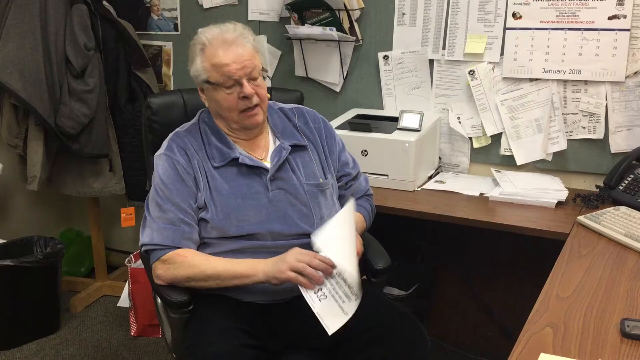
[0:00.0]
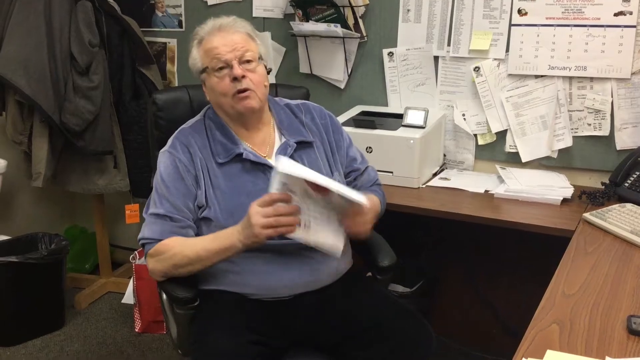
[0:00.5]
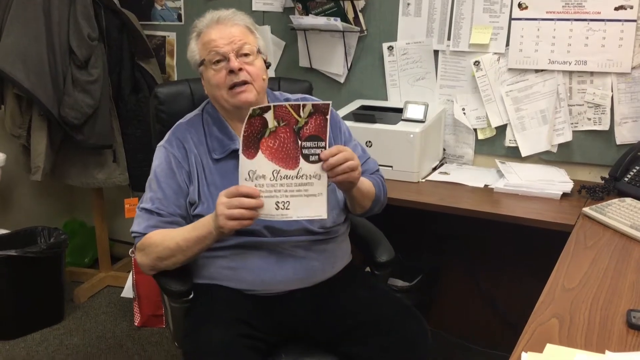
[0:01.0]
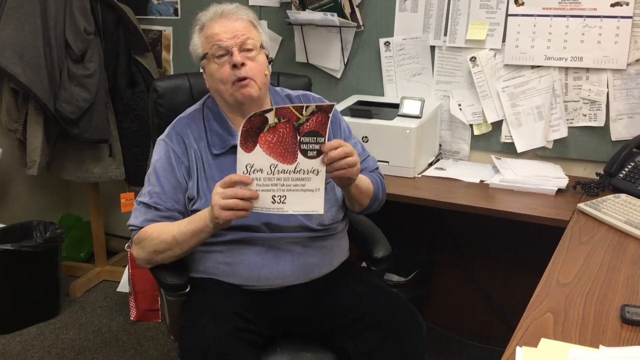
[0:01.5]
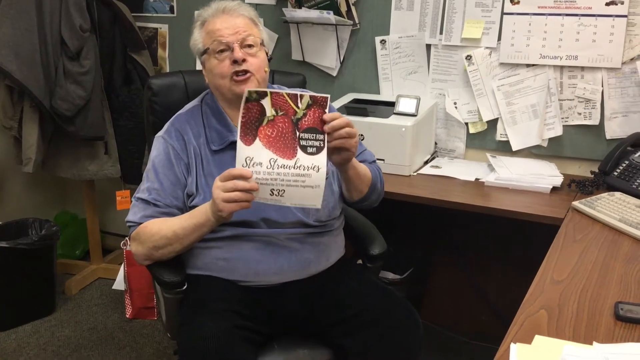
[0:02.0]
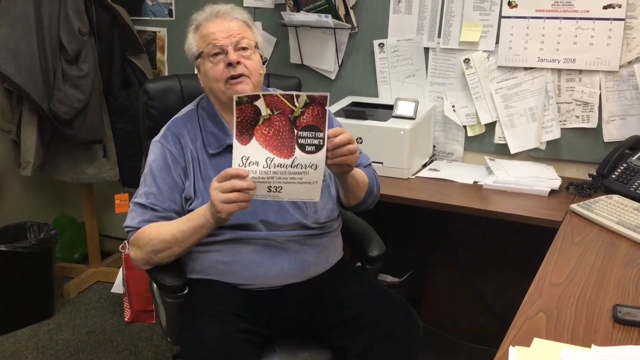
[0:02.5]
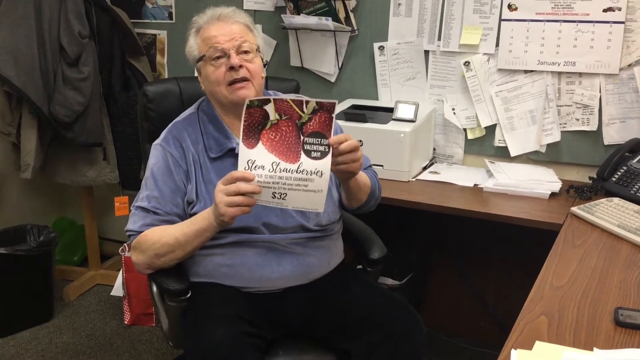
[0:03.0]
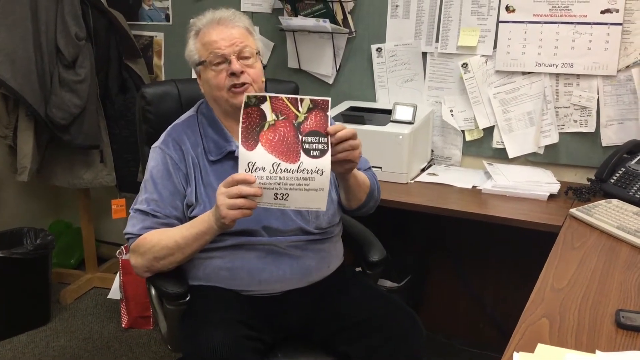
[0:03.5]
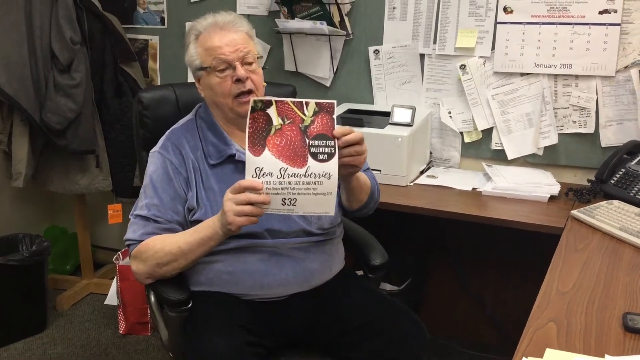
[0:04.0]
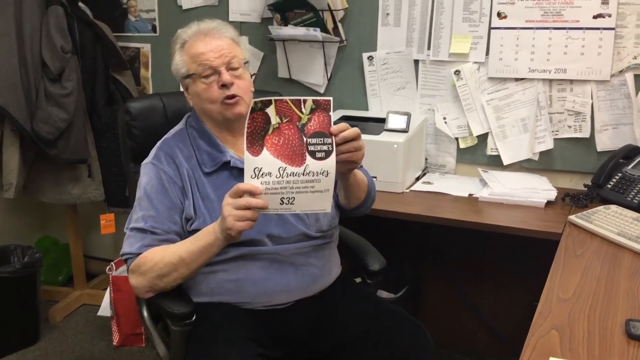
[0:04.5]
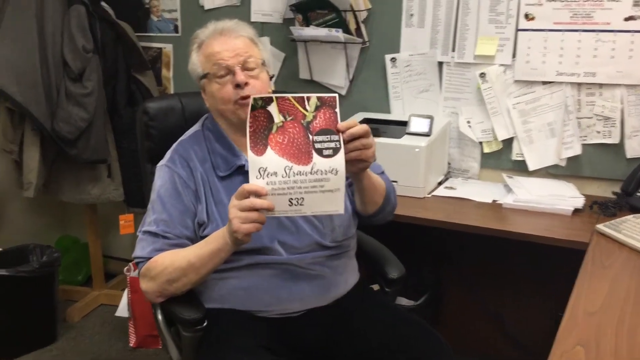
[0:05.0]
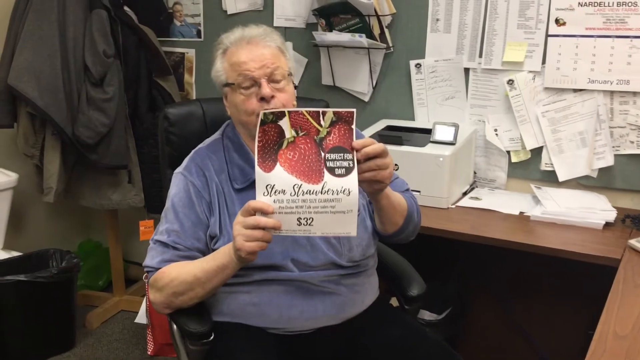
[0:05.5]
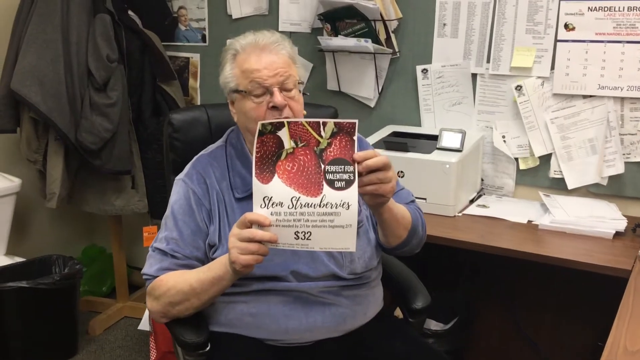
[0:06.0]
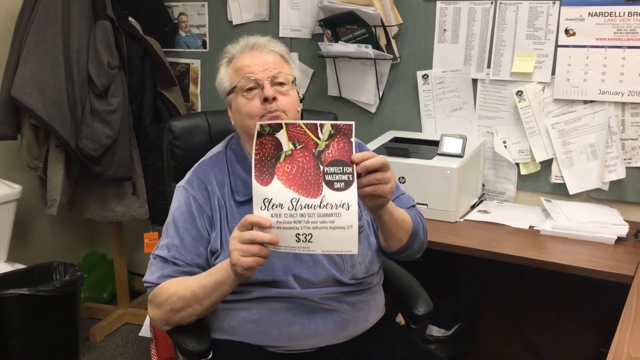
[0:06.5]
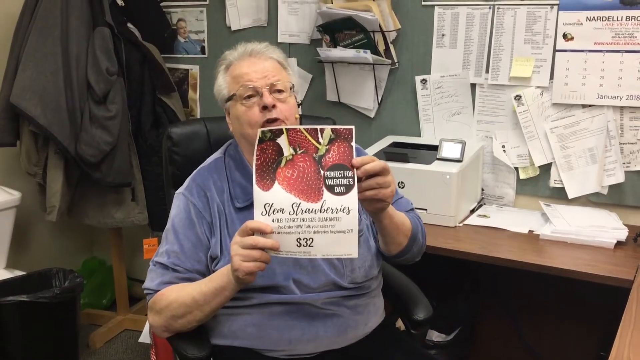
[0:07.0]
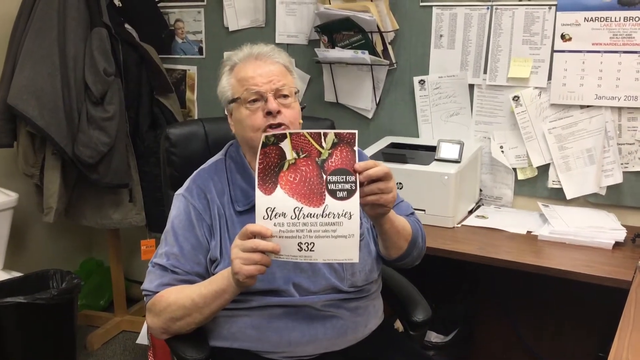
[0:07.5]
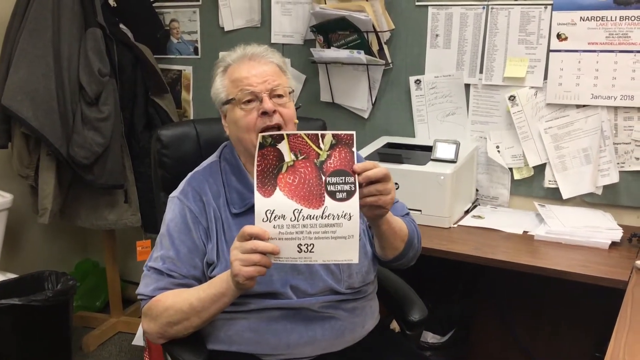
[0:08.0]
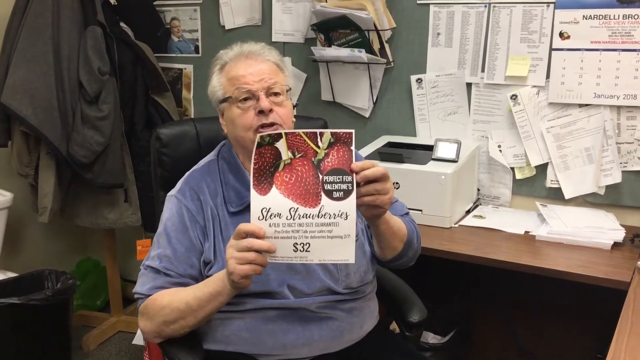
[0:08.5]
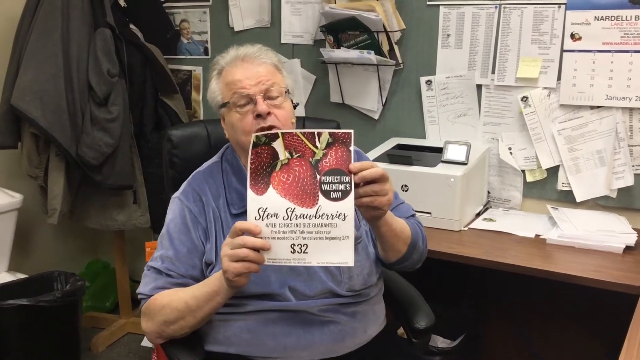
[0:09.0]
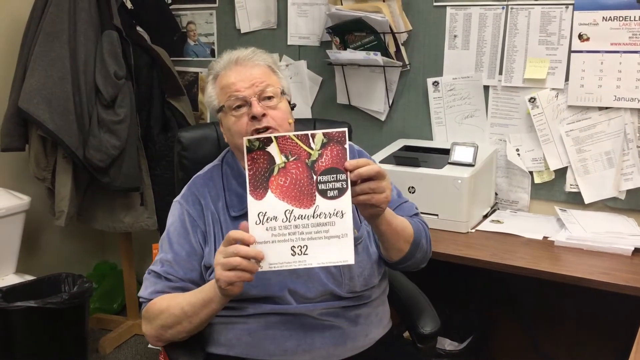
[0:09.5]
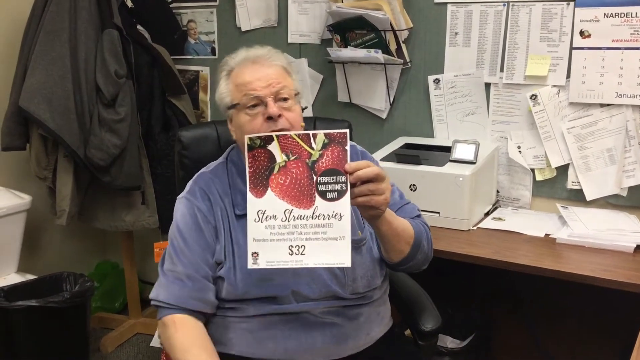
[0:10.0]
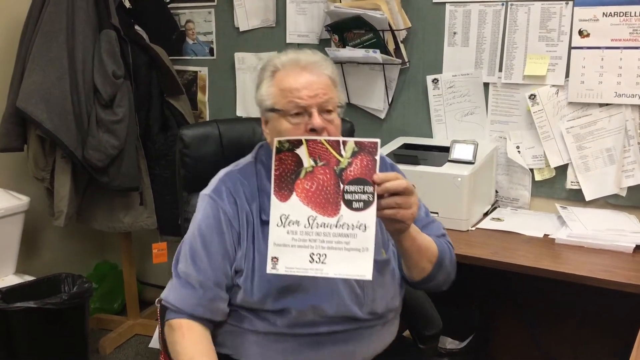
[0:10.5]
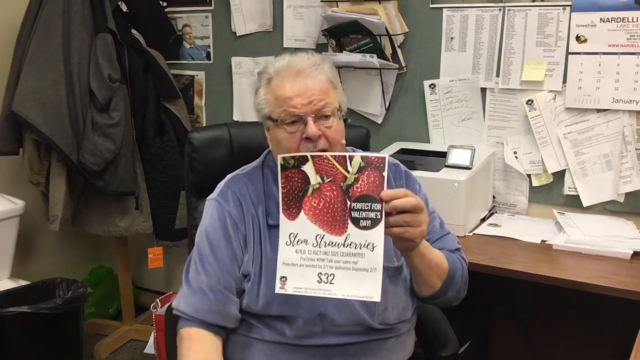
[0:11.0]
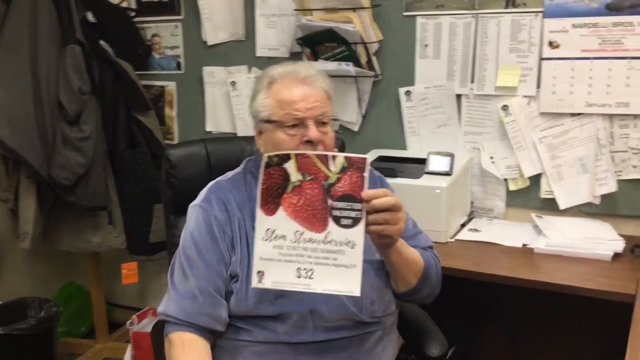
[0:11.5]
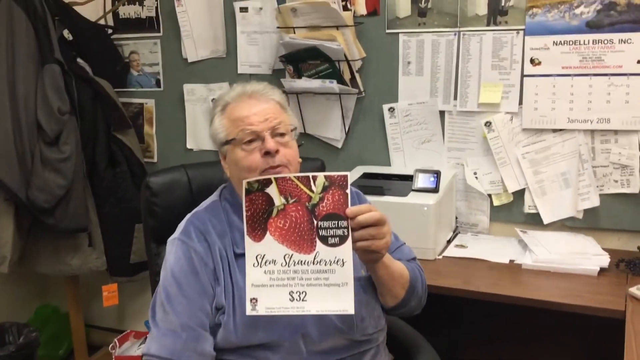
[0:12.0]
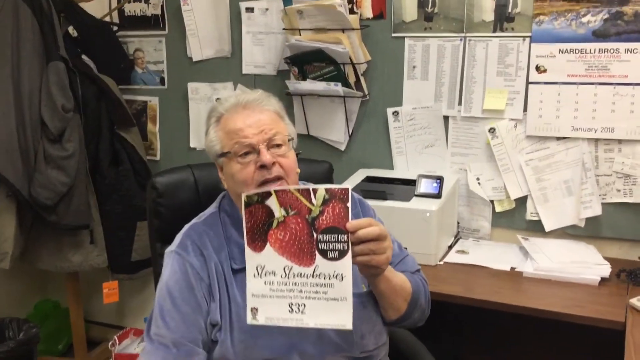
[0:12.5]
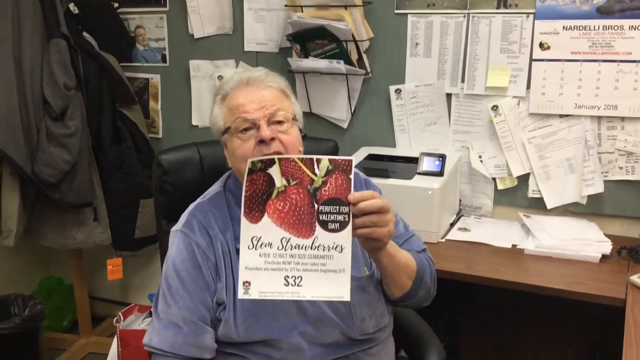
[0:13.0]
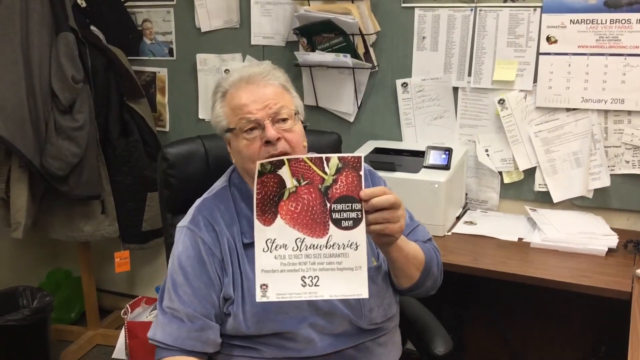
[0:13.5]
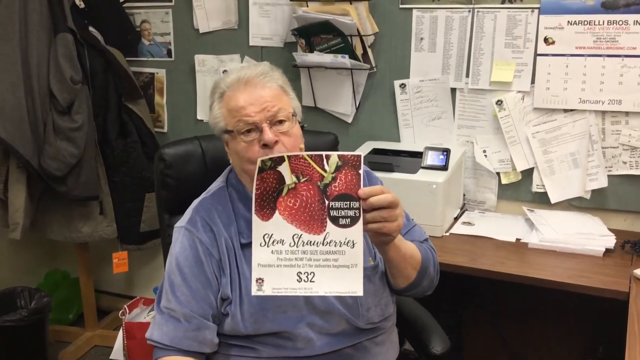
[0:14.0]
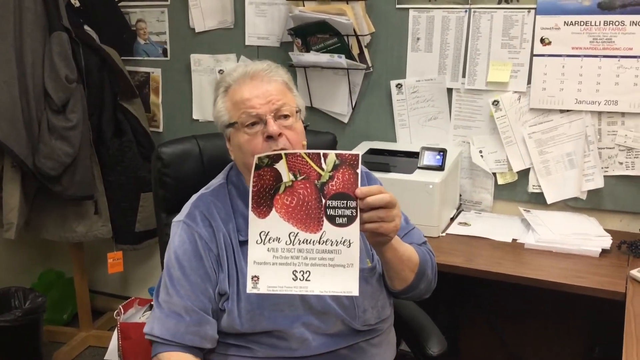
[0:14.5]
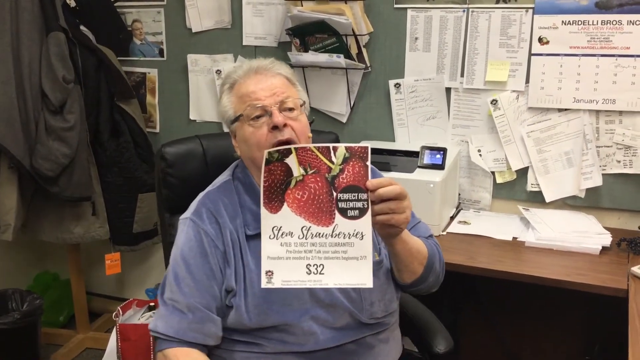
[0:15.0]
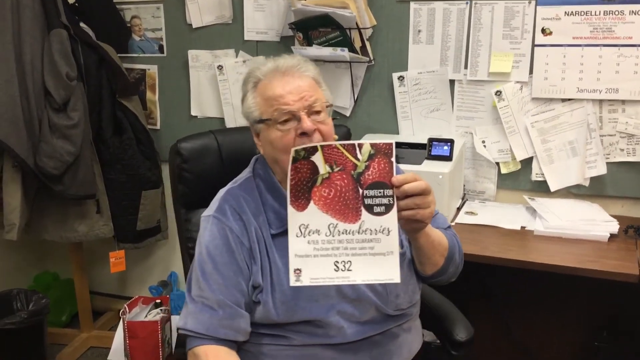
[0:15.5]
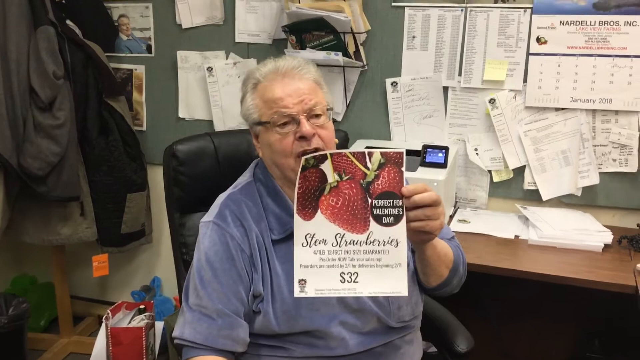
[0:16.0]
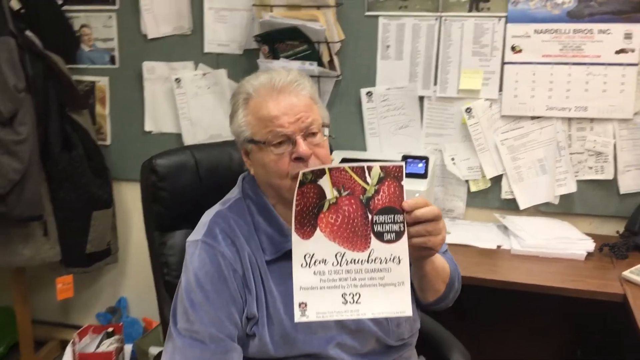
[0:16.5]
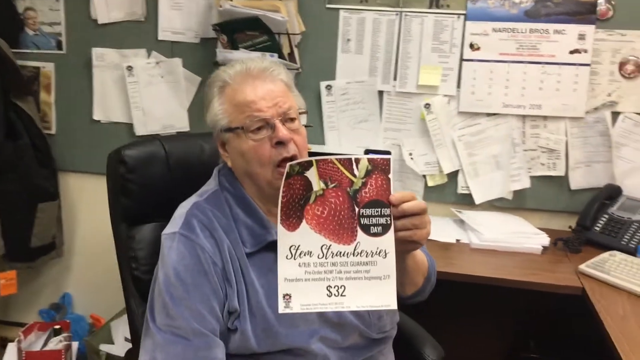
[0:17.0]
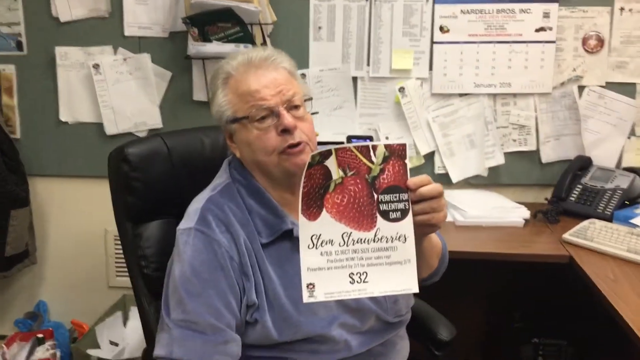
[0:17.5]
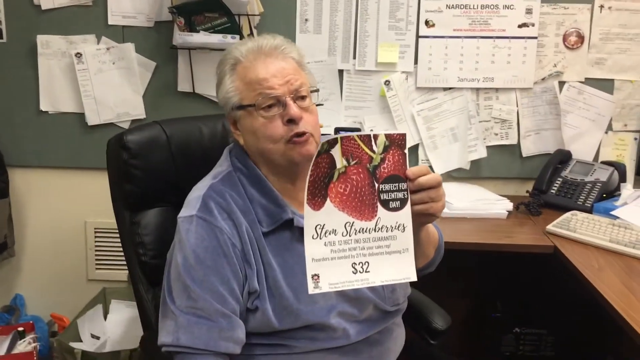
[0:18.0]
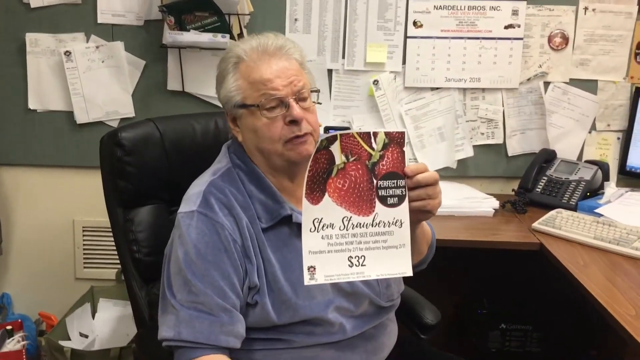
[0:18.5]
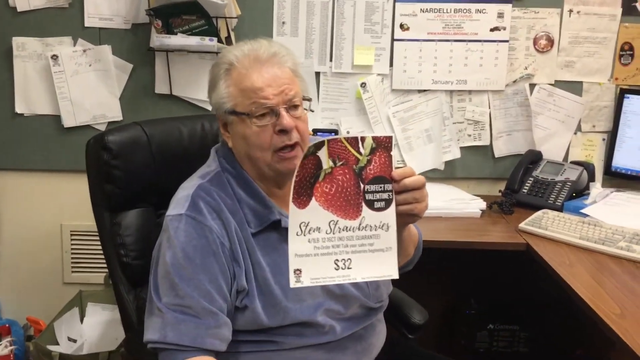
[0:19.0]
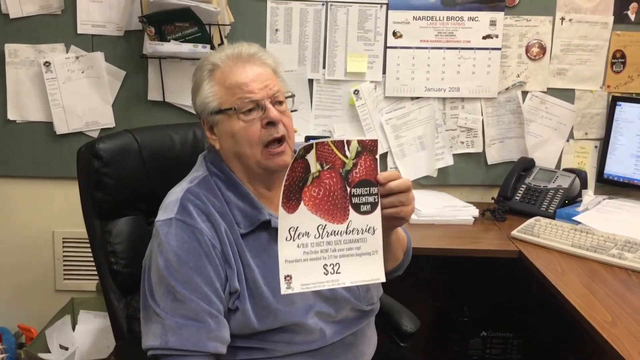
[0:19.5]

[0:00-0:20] An older man sits in what looks like an office-type setting, in an office chair with a desk to the right side. He holds up a piece of paper that says "Steve's Strawberries" and talks. He wears eyeglasses and a light blue to light purple shirt, and has gray, white hair. Behind him to the right, a white printer is on the desk, and a bunch of papers hang on the wall. Some coats hang on a rack in the left corner. As the man continues to talk, the camera view shifts to the left side. He holds the paper with his left hand, and there are images of strawberries on it.